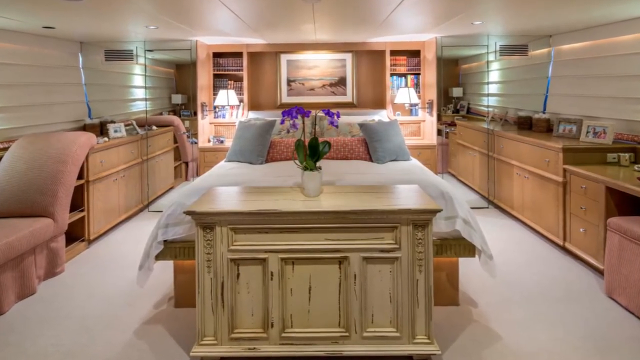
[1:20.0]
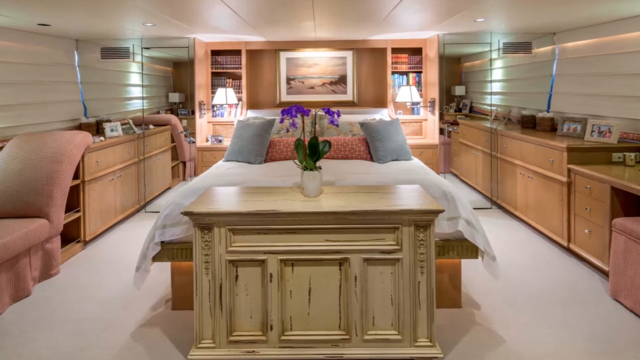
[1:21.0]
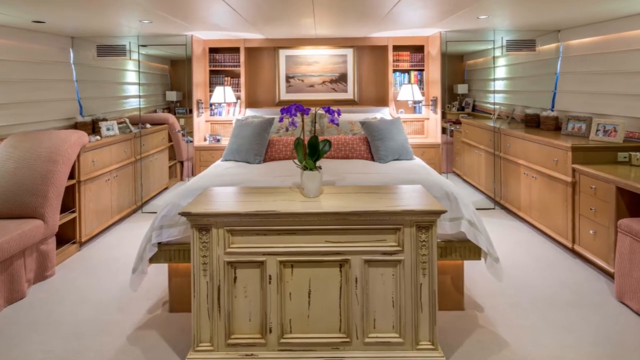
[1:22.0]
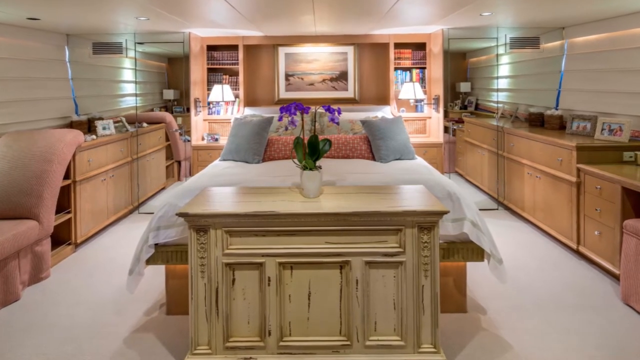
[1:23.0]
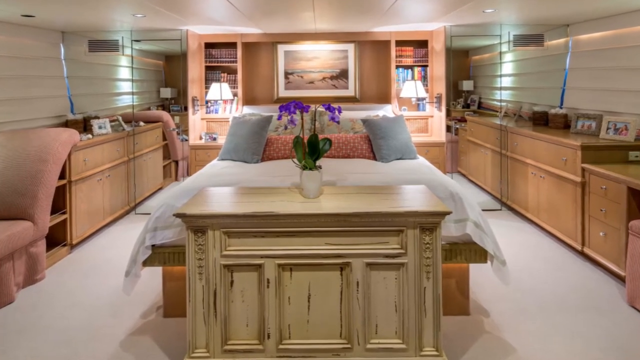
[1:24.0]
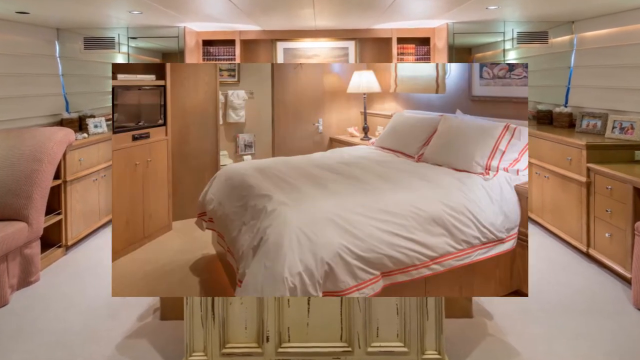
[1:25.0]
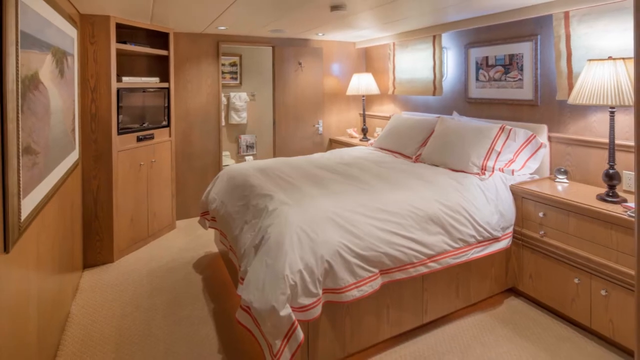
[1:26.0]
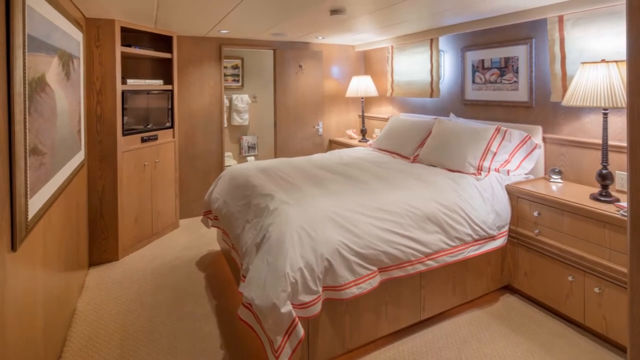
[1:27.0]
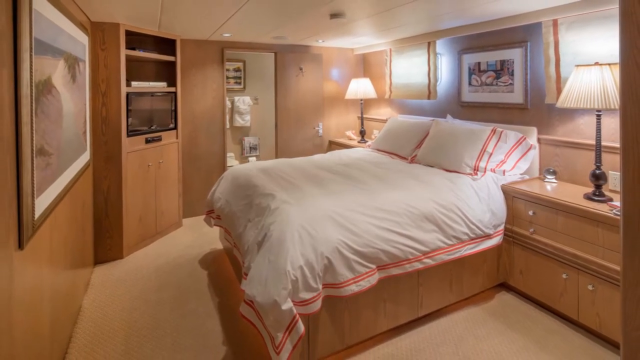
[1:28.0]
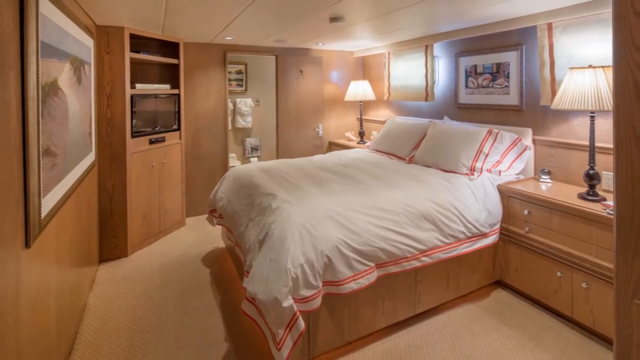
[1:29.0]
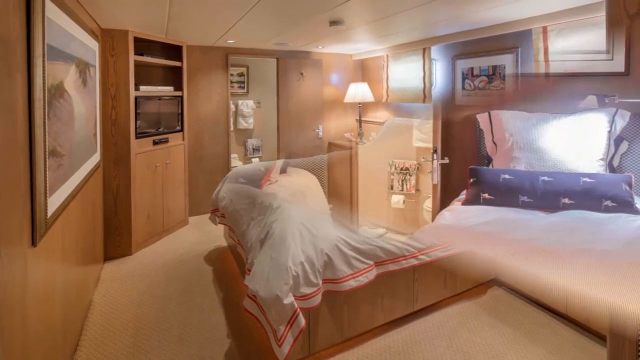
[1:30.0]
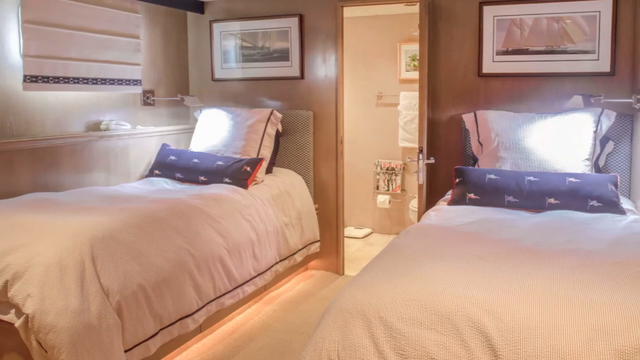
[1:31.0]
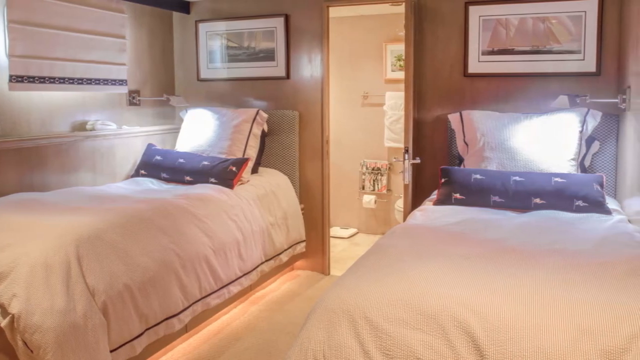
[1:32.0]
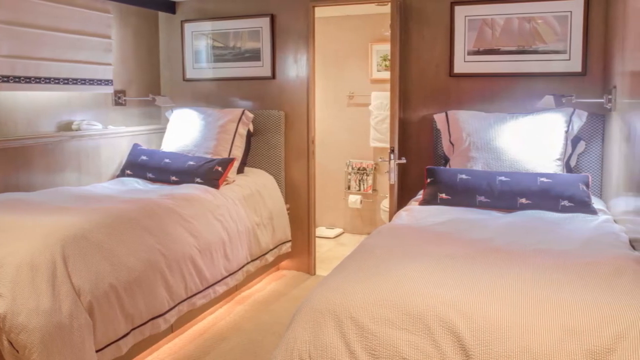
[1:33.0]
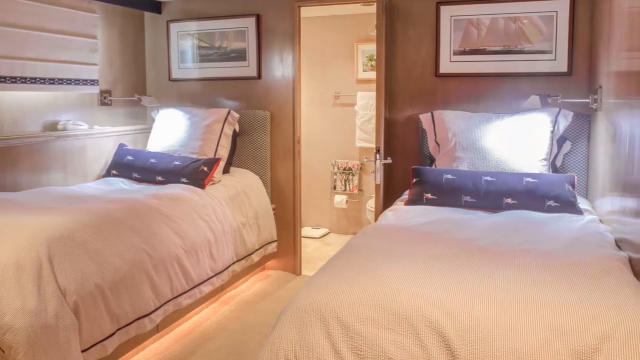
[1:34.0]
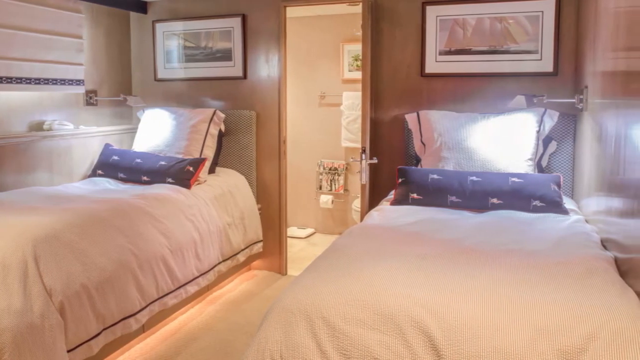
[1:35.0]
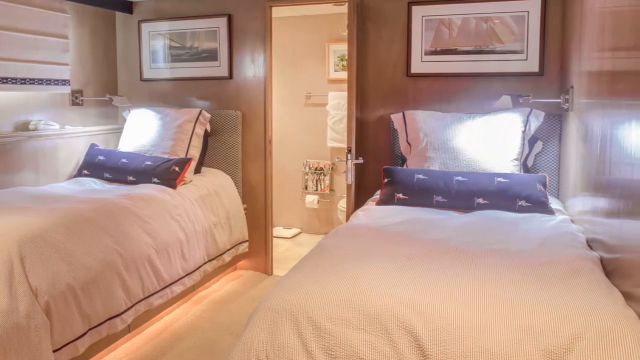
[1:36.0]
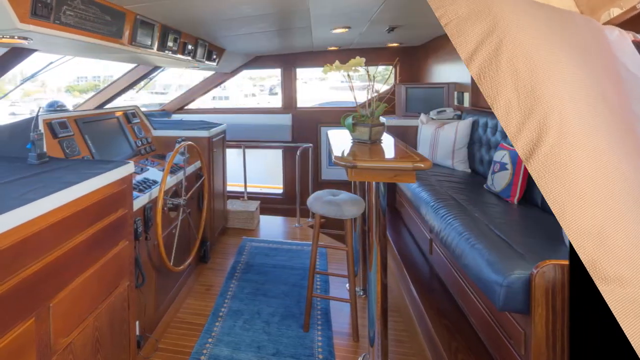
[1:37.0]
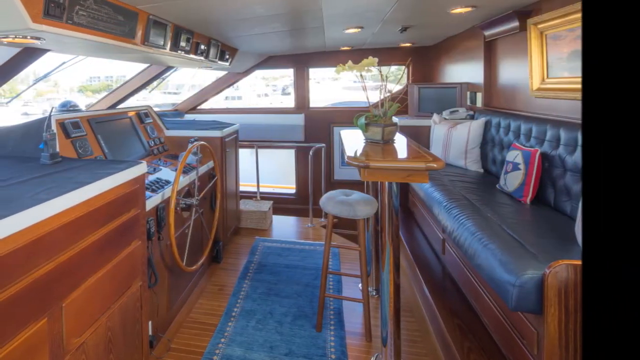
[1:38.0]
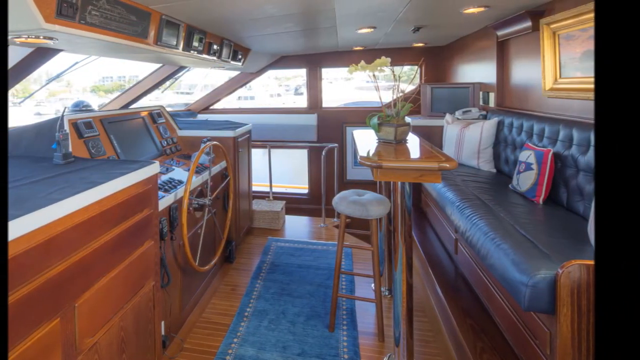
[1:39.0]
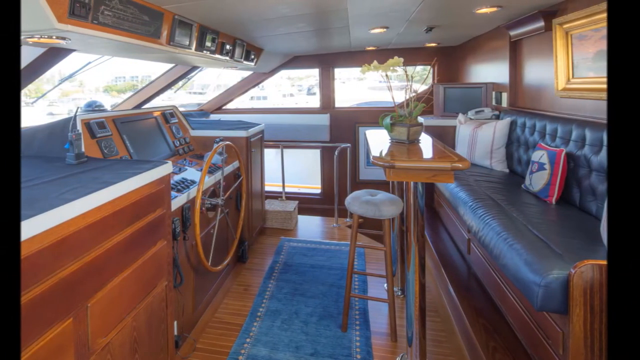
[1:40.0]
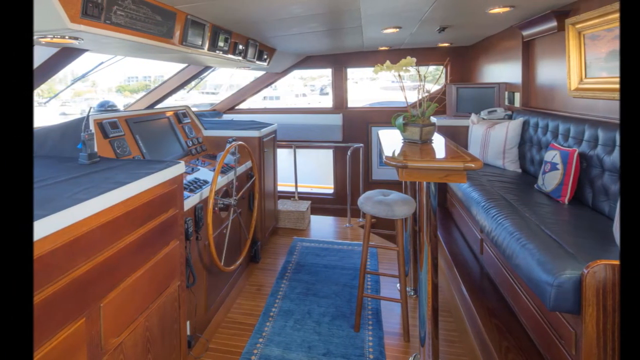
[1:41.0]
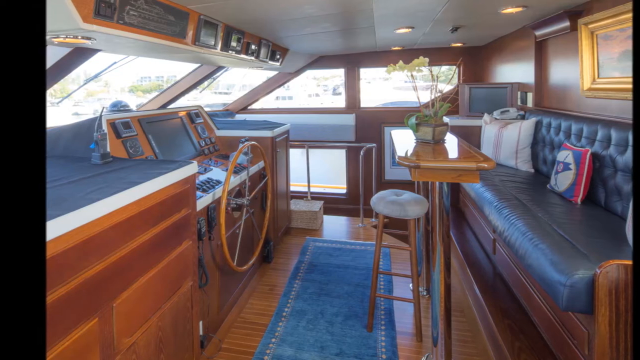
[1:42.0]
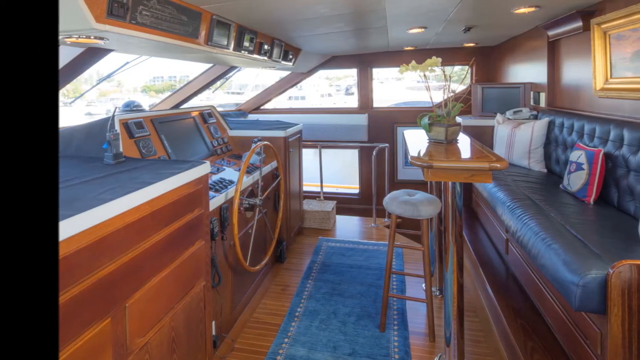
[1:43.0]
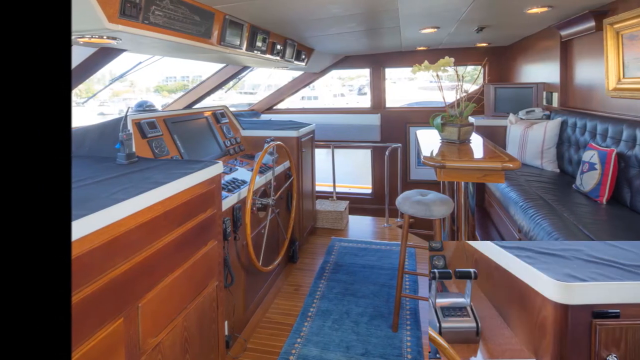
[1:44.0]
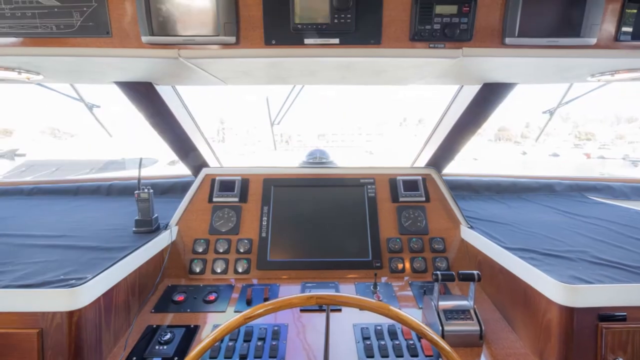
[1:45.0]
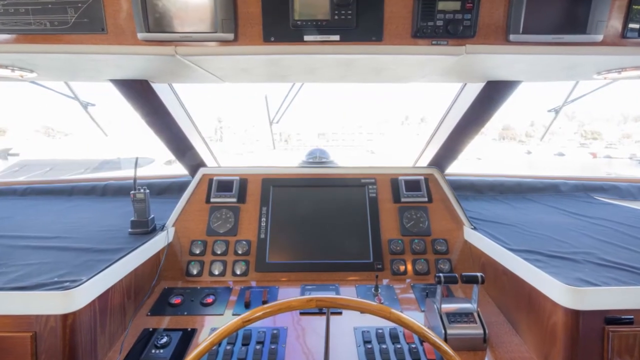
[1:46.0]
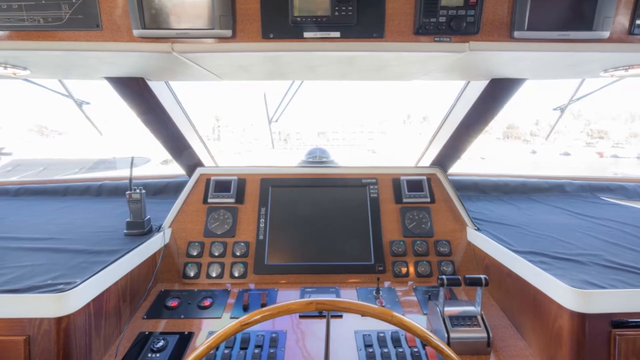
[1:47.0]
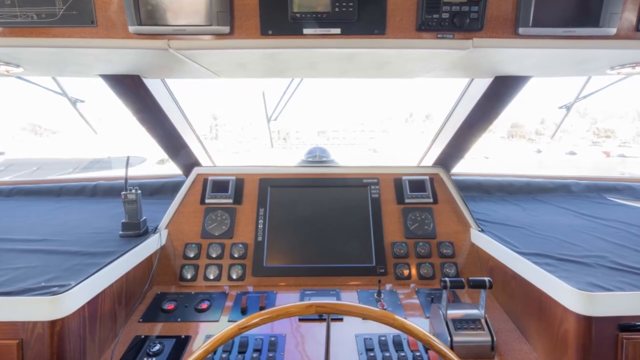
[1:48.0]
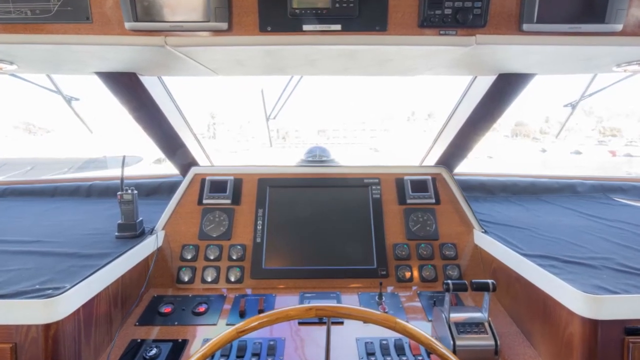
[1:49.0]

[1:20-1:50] A bedroom is followed by another, smaller bedroom that is not very roomy and looks crowded. It has an entertainment center at the corner, a full-length mirror, a door that leads to a bathroom, and a full-size bed on a platform bed frame. A third bedroom has two twin beds, one on each side, with a door leading to a bathroom between them, so each bedroom has its own bathroom. This appears to be the smallest room, fitting only the two twin beds; two portraits hang on the wall and there are not many windows. The scene then changes to the cabin room where the captain is, at the front of the yacht, showing the control area or control dashboard of the vessel, the cockpit, along with a lounge chair.